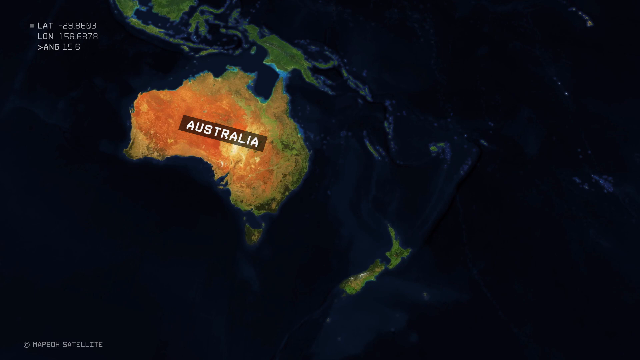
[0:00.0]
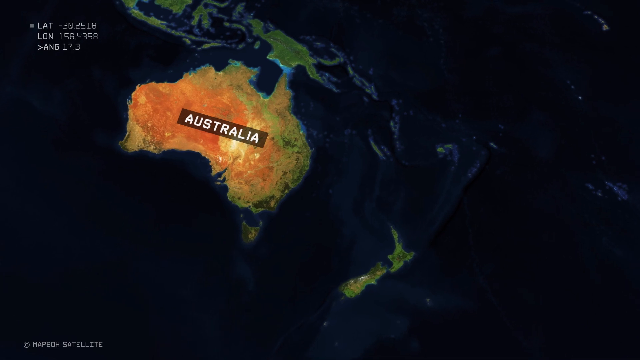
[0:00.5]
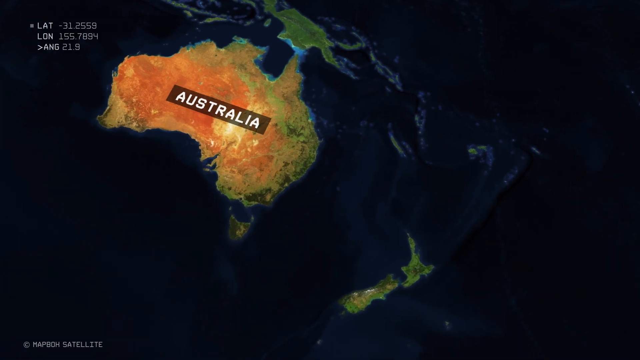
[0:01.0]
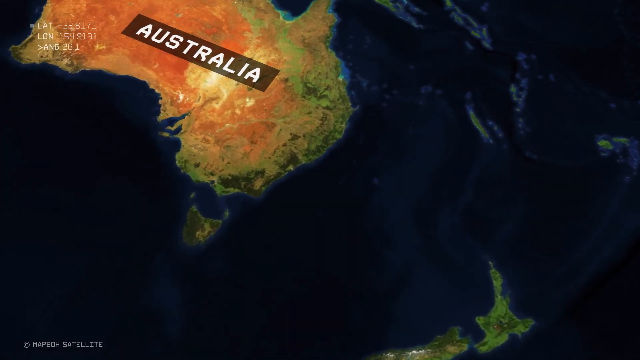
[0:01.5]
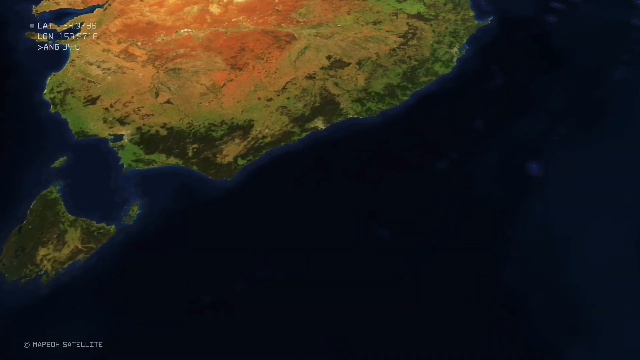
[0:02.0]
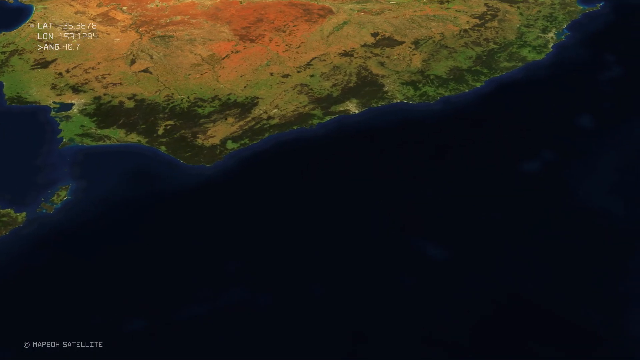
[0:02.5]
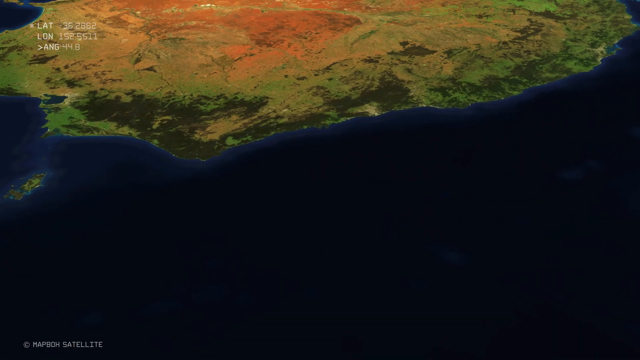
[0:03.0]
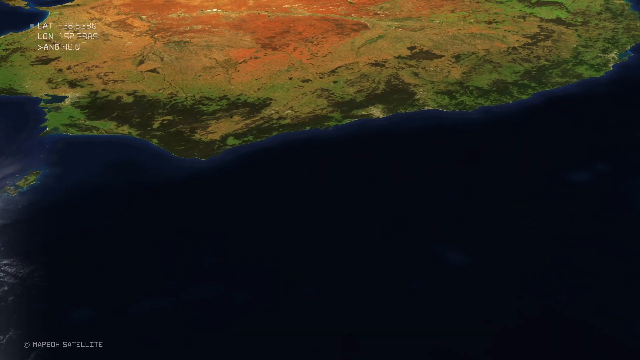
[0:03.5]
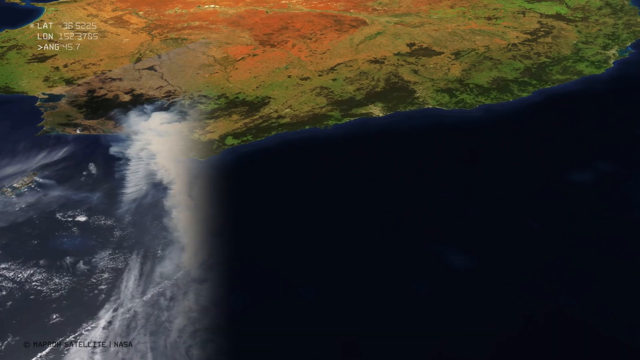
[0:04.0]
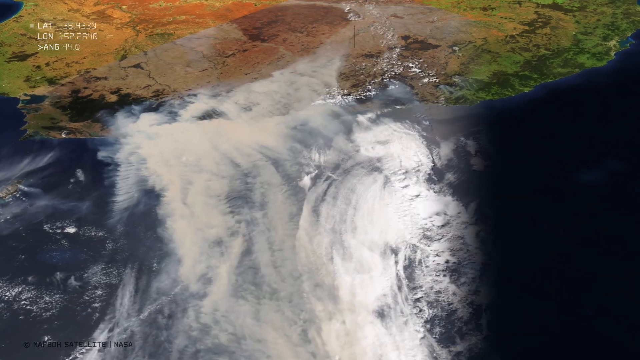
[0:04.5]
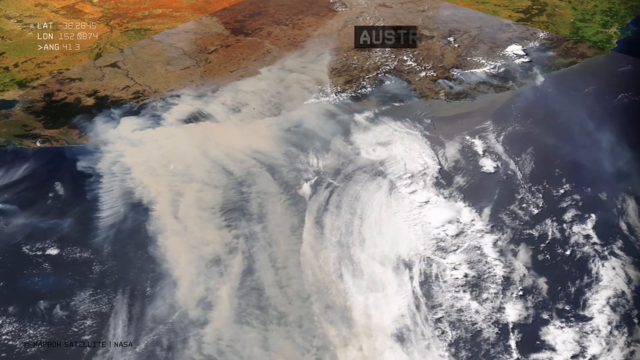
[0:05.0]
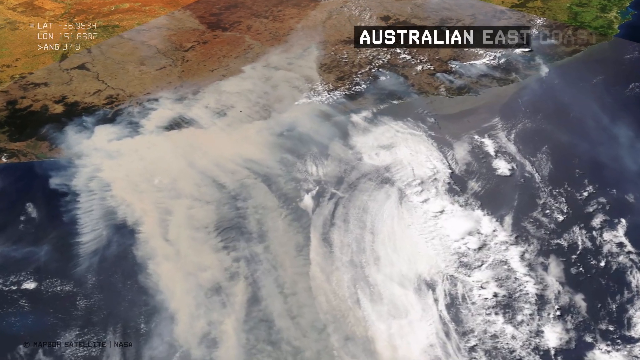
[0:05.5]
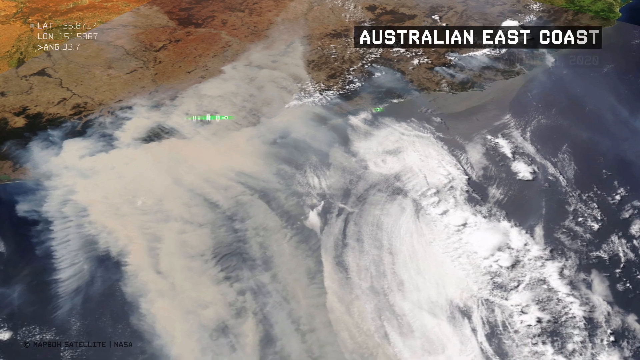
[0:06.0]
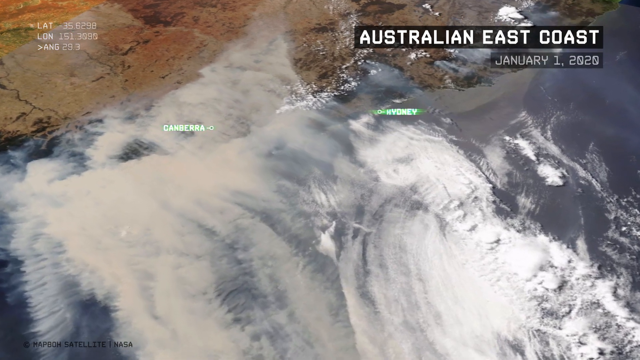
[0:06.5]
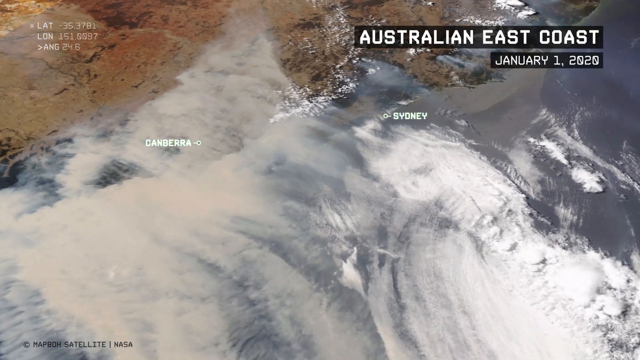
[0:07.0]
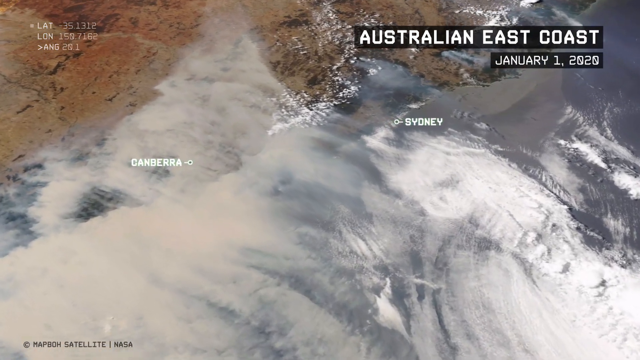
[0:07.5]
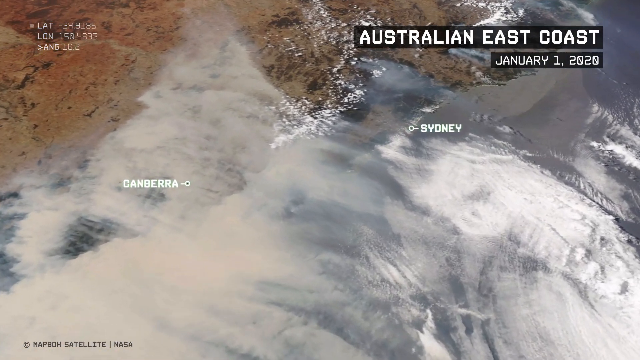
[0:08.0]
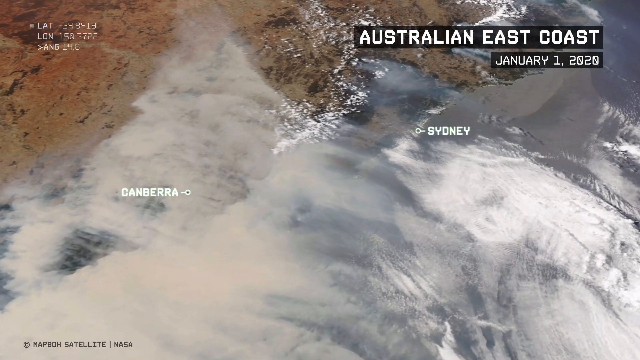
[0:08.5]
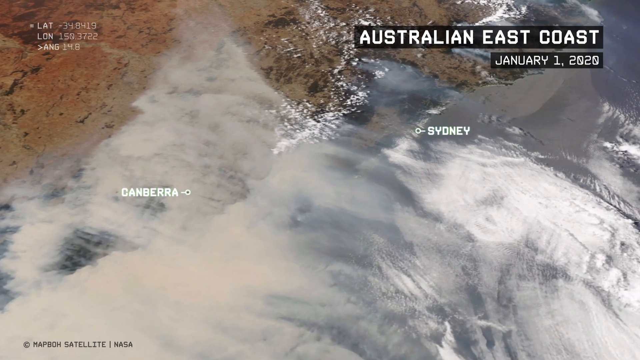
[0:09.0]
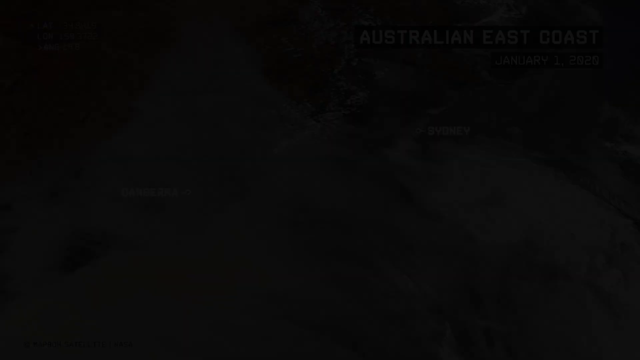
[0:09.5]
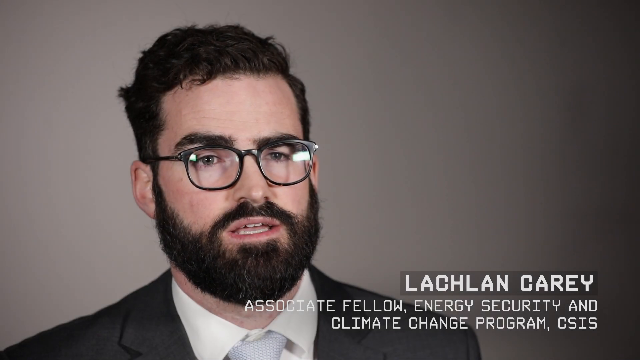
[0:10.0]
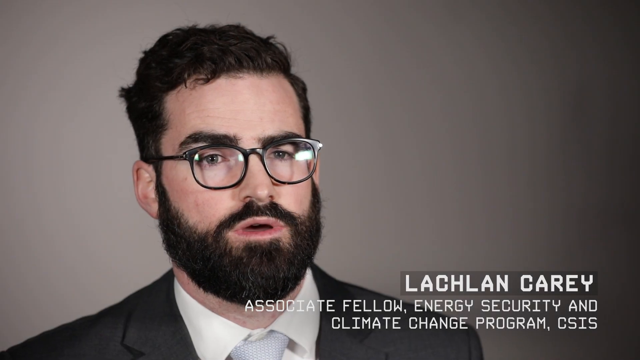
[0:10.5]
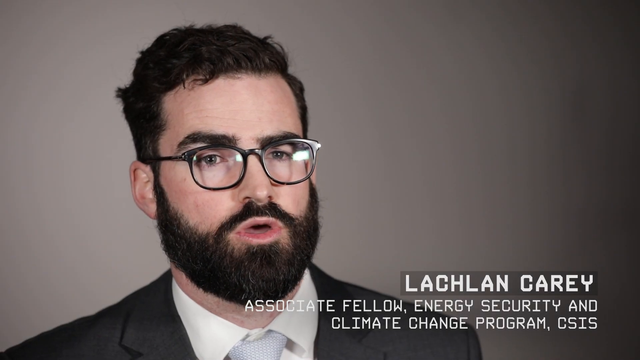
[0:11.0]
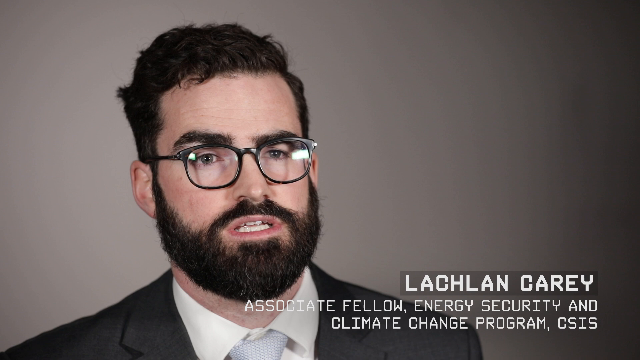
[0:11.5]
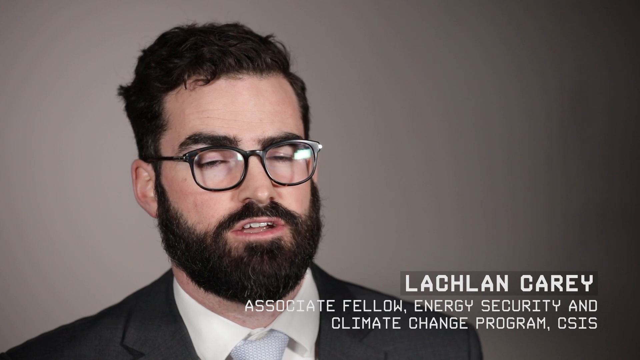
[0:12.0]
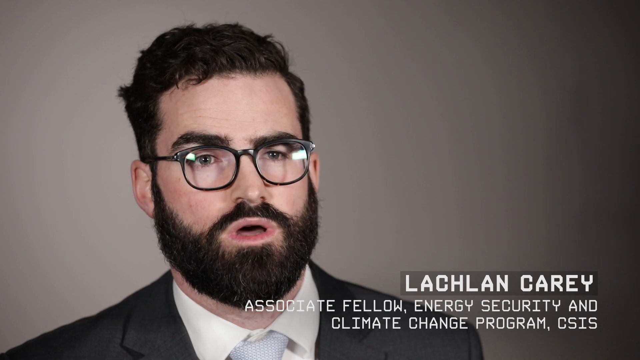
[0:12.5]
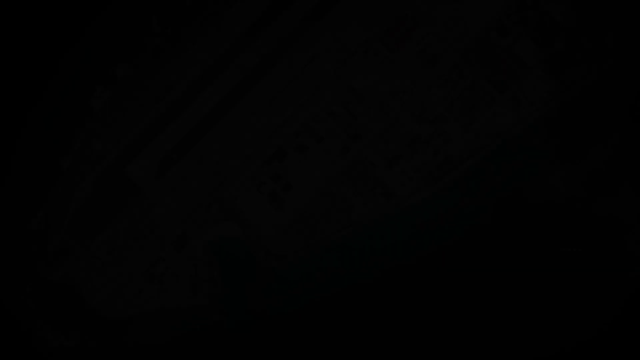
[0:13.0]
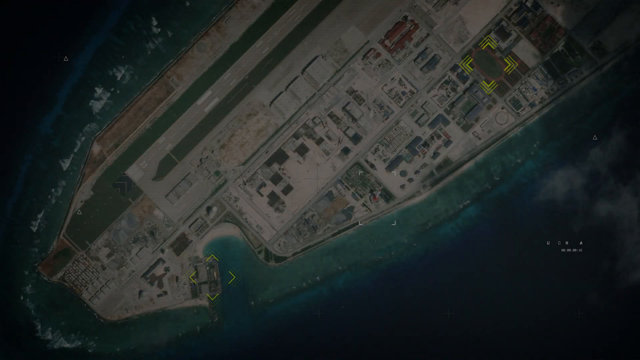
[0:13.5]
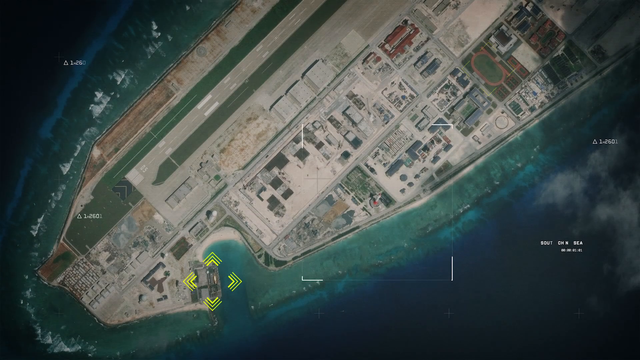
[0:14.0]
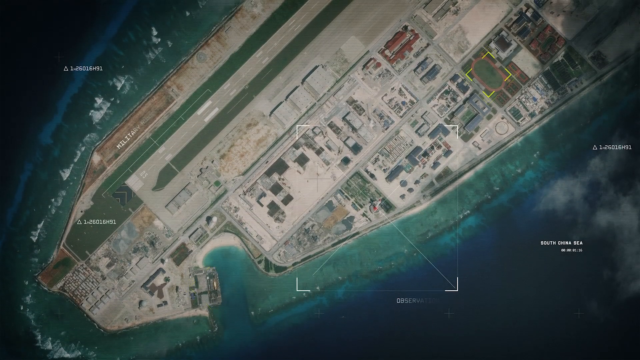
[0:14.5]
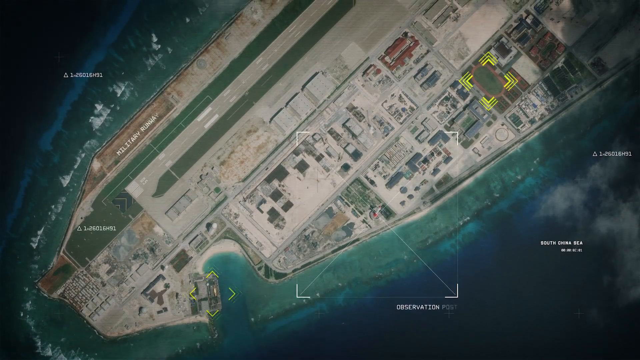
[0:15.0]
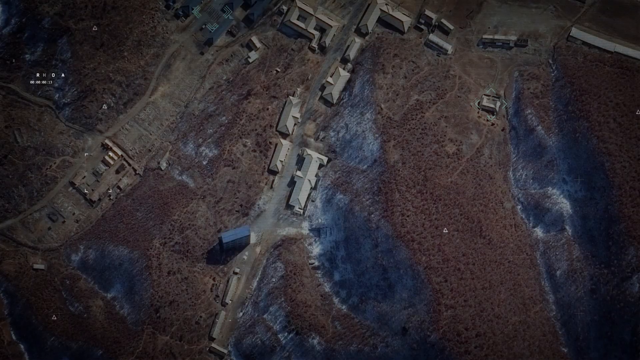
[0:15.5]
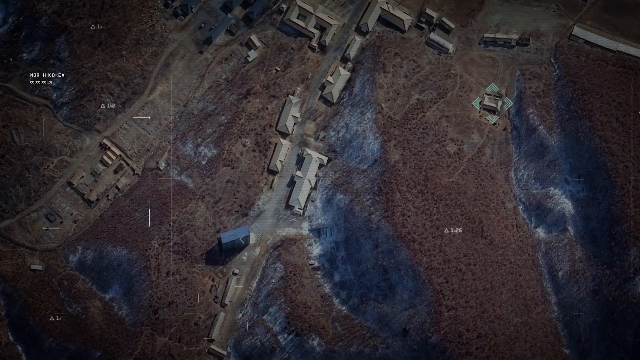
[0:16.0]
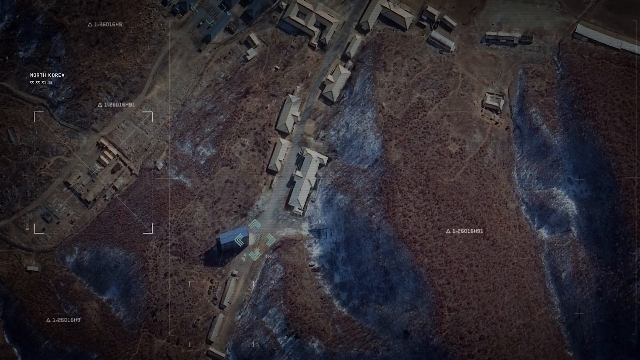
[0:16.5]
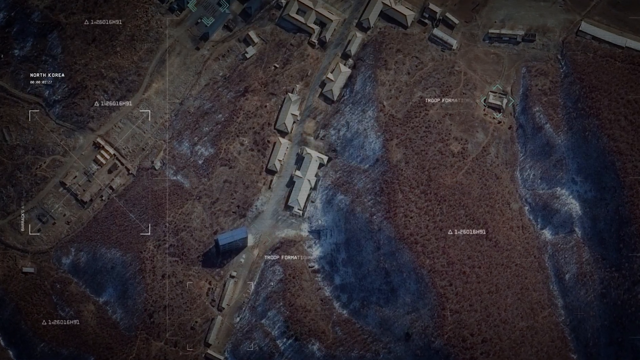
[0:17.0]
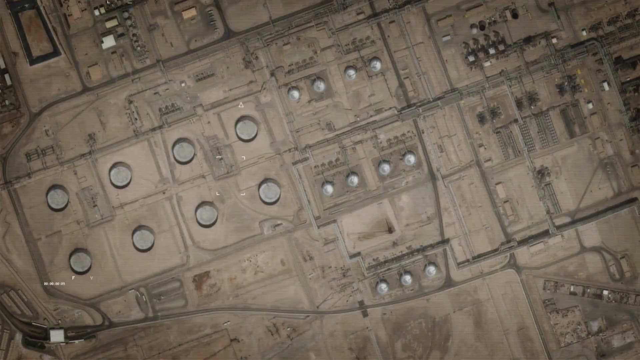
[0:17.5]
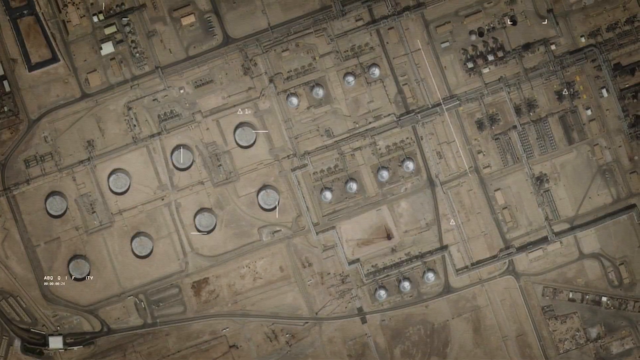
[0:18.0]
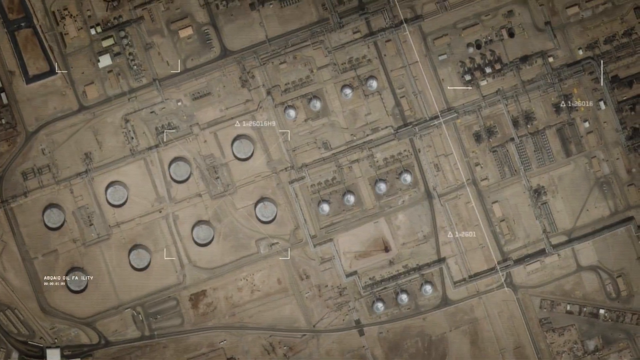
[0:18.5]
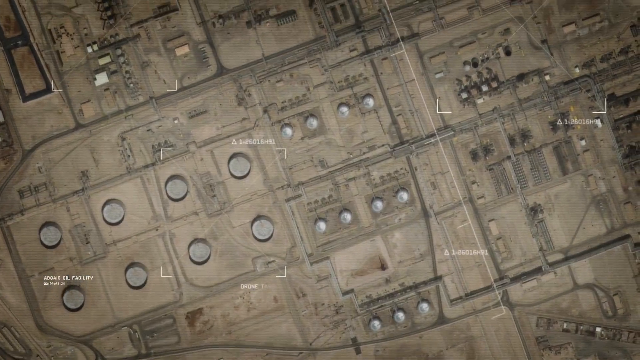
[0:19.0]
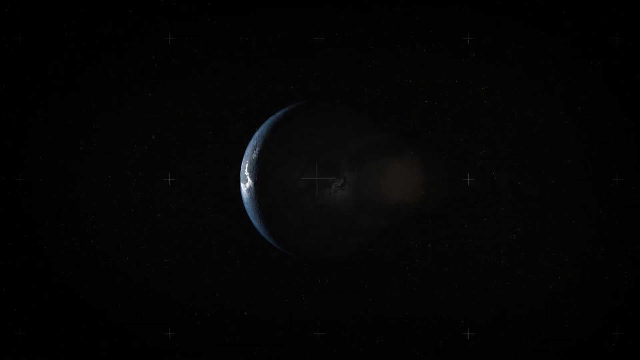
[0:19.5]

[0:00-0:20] A picture of the Earth appears, and Australia seems to be the first part shown. The view zooms in on the Australian continent and then shows the Australian east coast, in a picture from 1 January 2020. Canberra and Sydney are highlighted with their cardinal points. A man named Lachlan Carey, an associate fellow of the energy security and climate change program, is shown. The view then zooms in on Australia, and a few places are shown before it returns to the Australian continent.